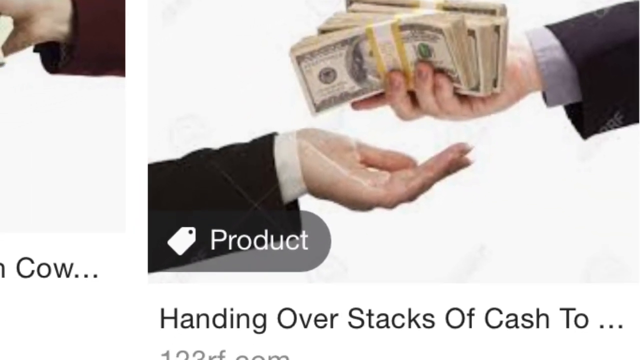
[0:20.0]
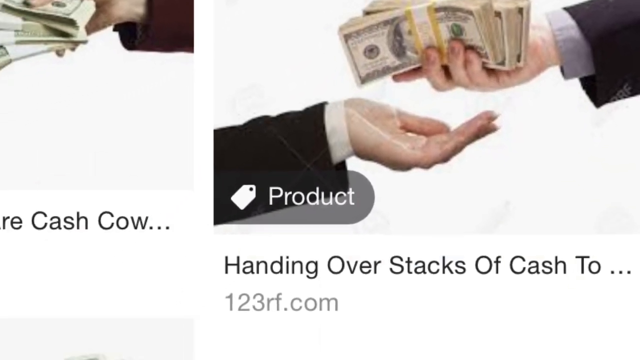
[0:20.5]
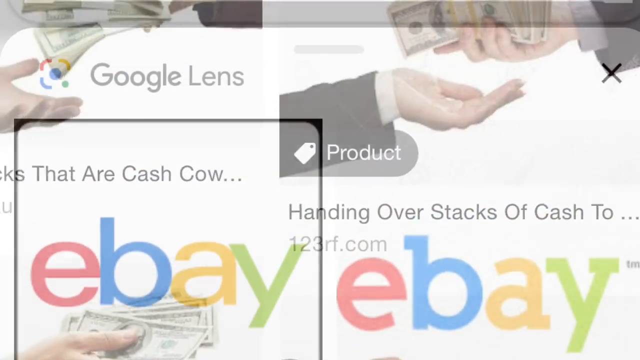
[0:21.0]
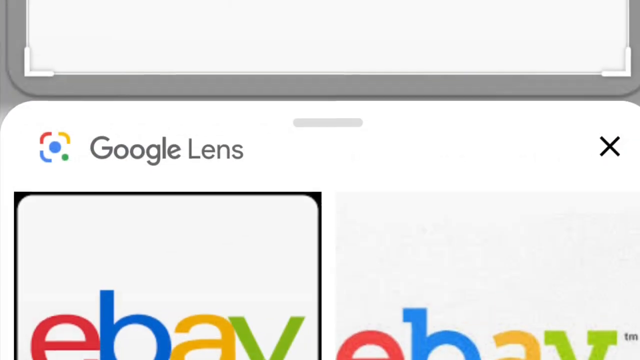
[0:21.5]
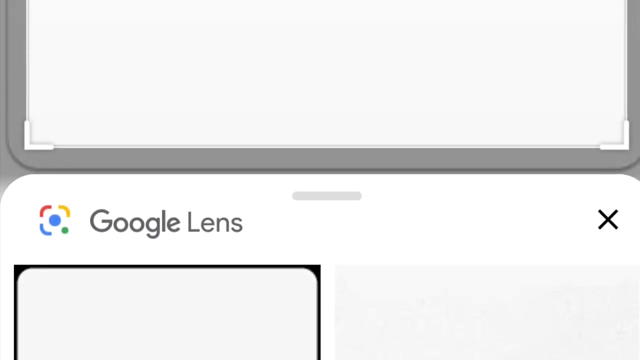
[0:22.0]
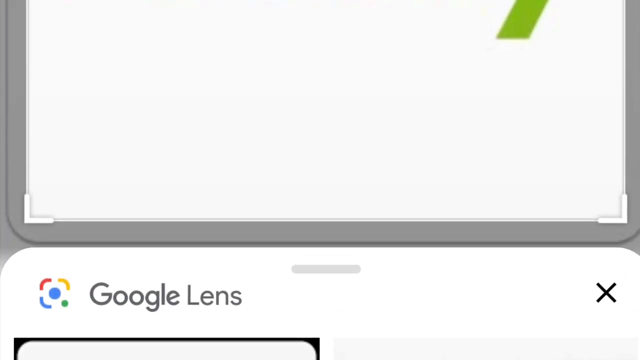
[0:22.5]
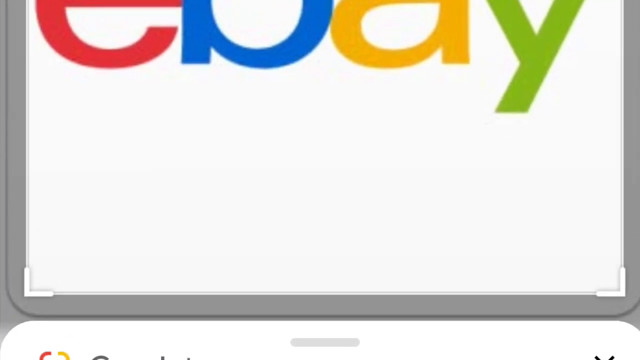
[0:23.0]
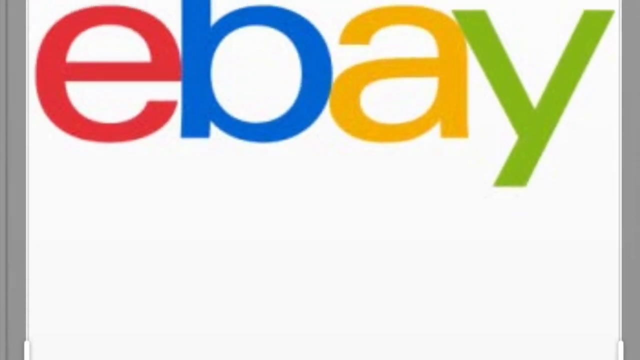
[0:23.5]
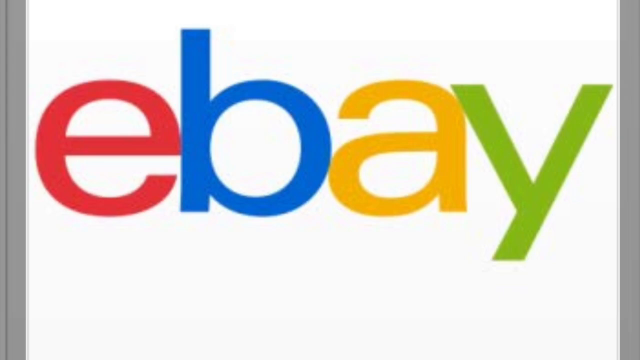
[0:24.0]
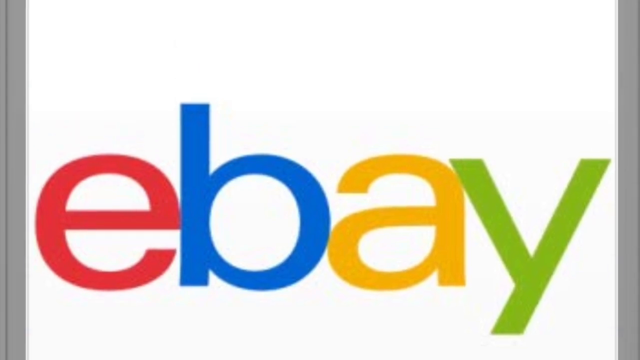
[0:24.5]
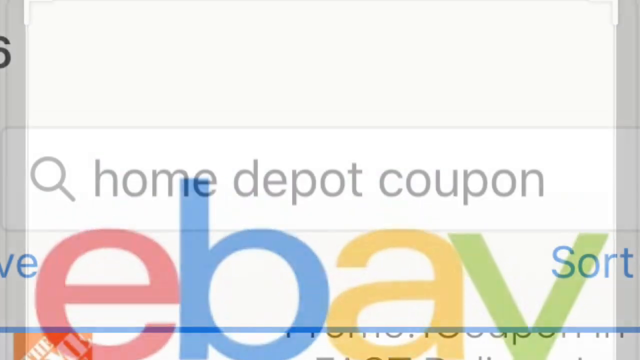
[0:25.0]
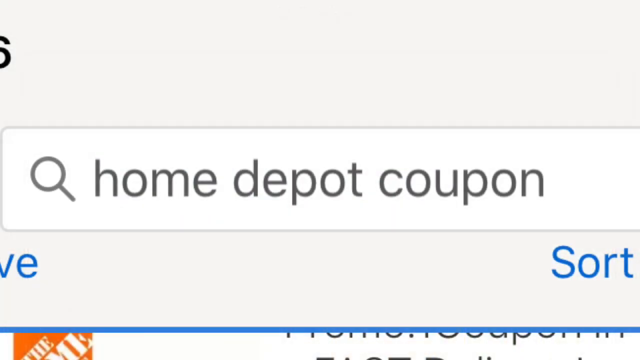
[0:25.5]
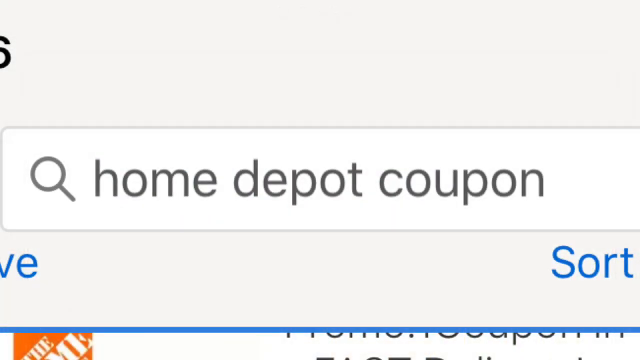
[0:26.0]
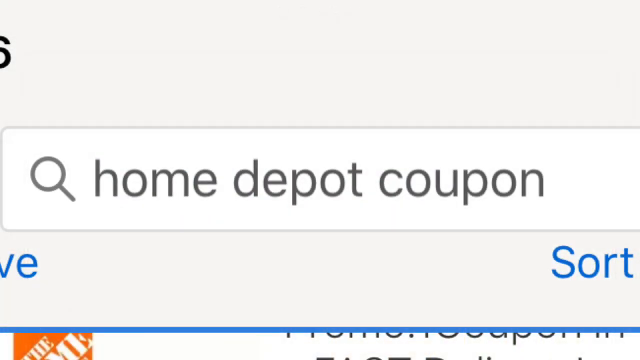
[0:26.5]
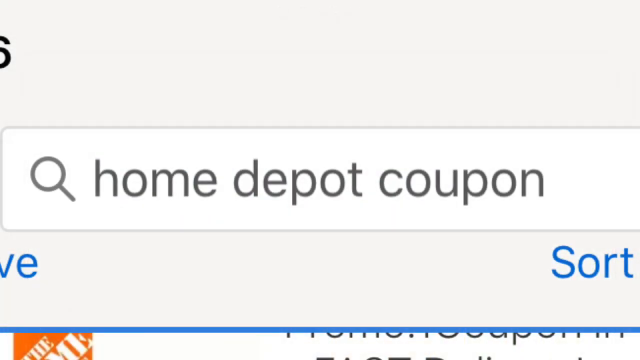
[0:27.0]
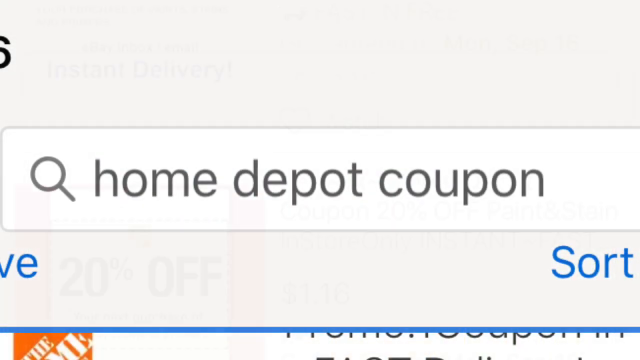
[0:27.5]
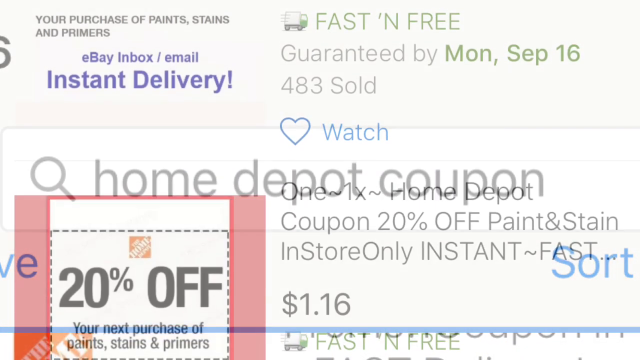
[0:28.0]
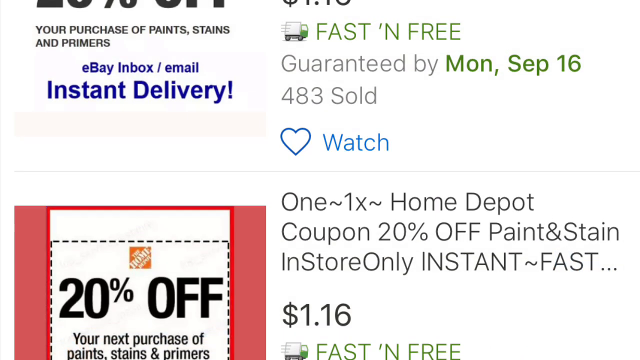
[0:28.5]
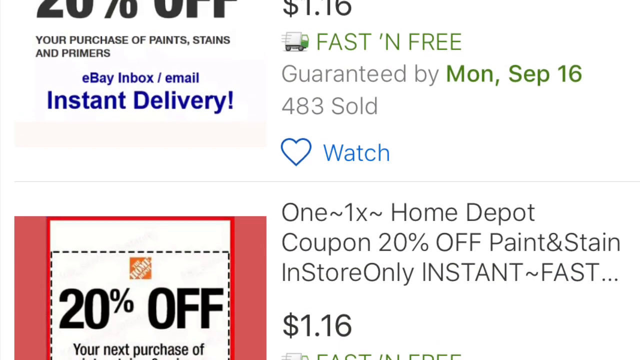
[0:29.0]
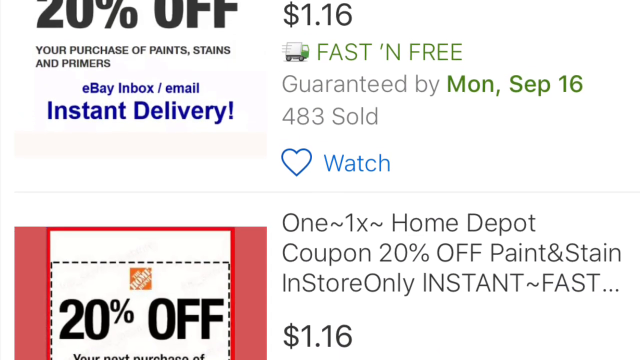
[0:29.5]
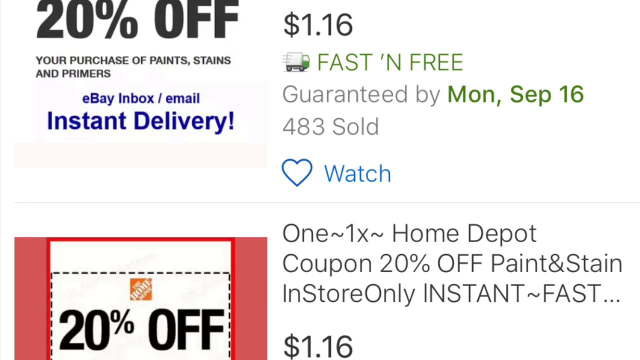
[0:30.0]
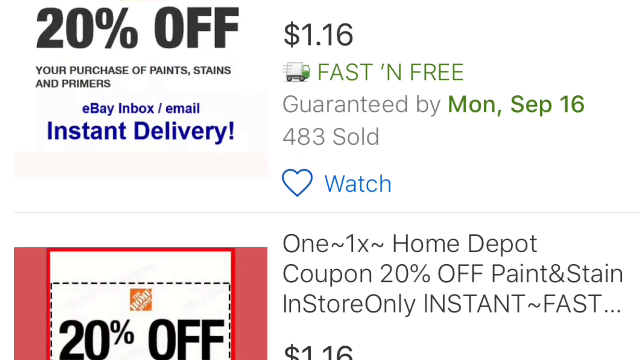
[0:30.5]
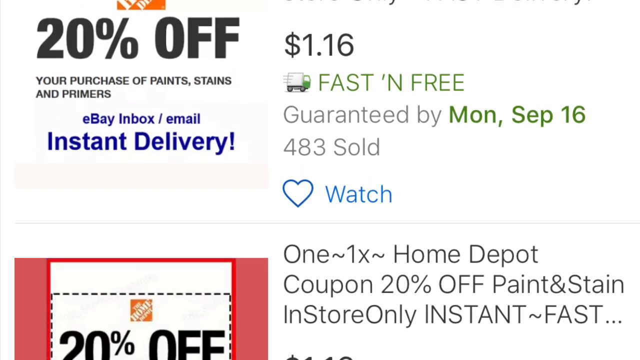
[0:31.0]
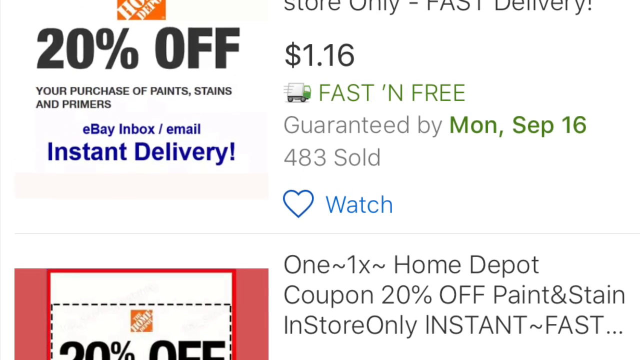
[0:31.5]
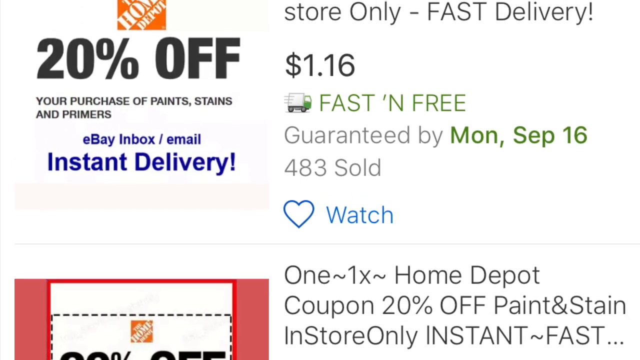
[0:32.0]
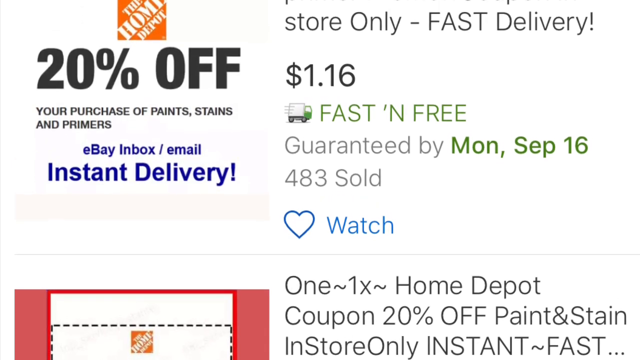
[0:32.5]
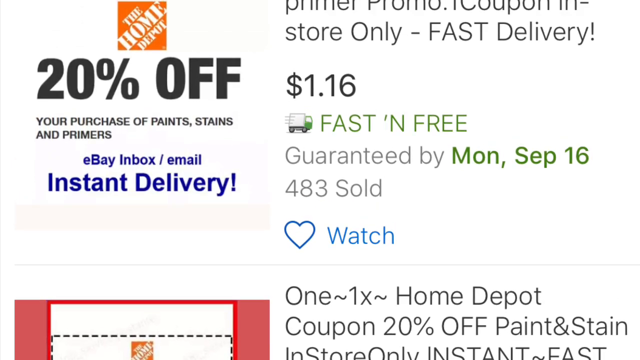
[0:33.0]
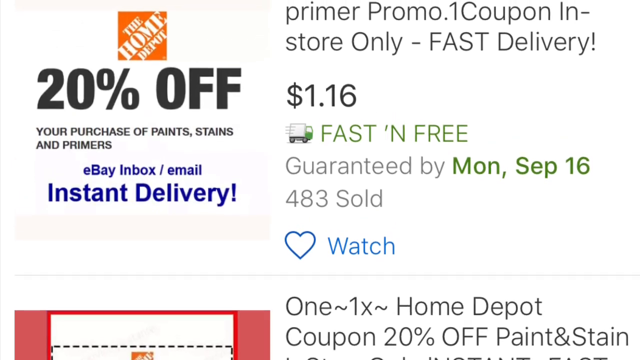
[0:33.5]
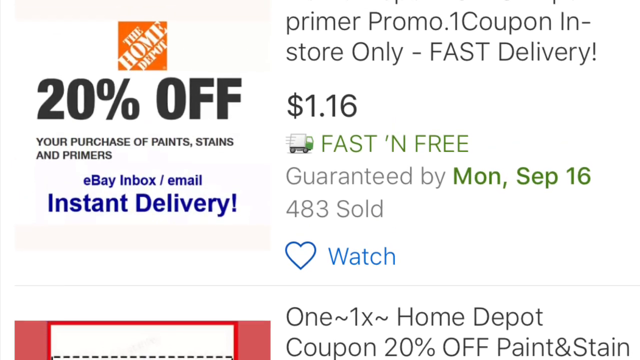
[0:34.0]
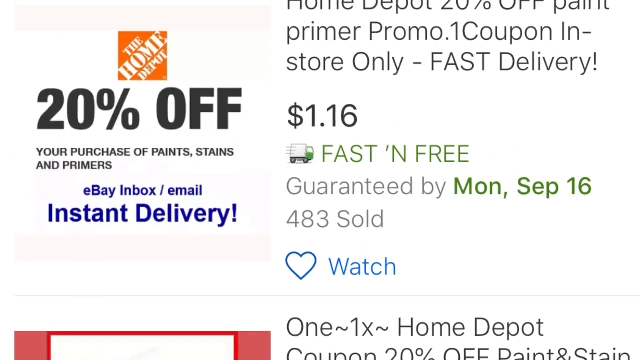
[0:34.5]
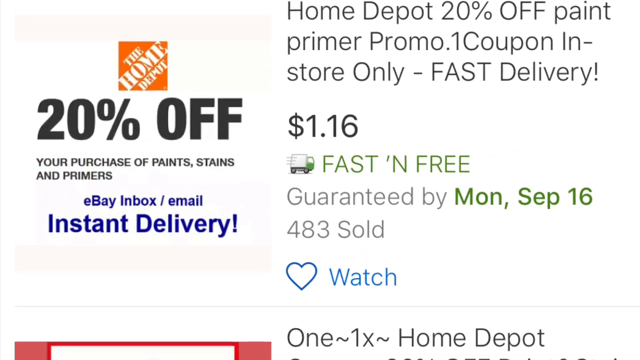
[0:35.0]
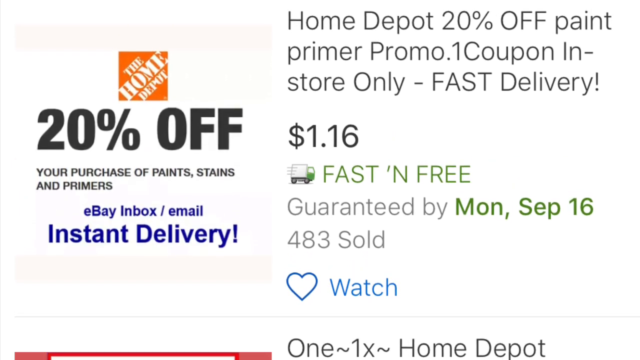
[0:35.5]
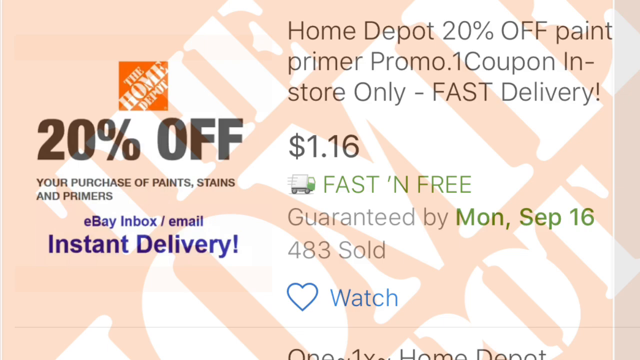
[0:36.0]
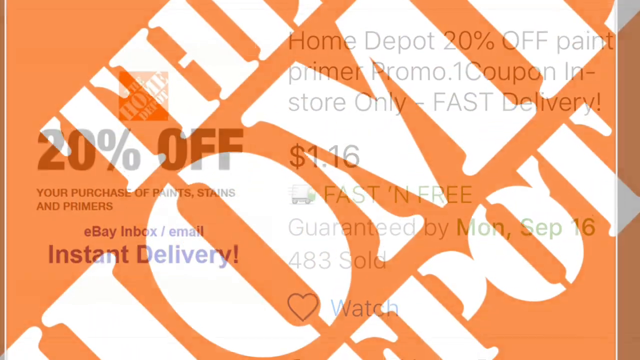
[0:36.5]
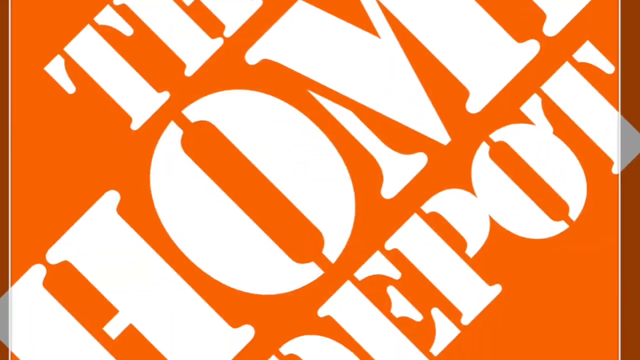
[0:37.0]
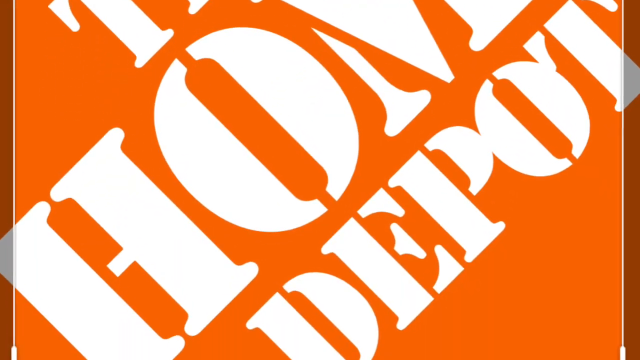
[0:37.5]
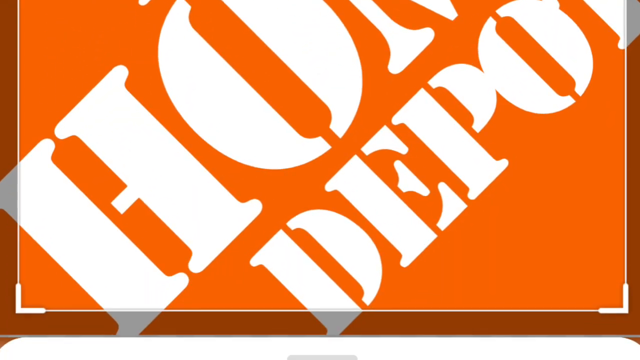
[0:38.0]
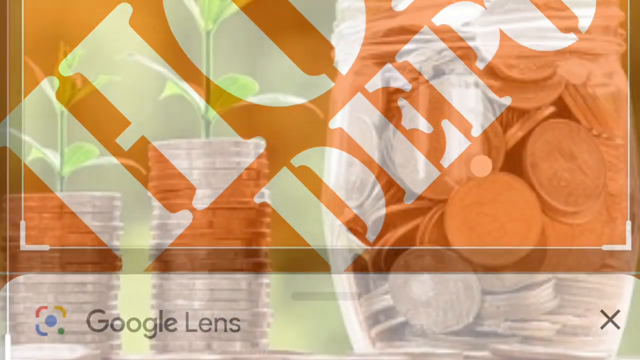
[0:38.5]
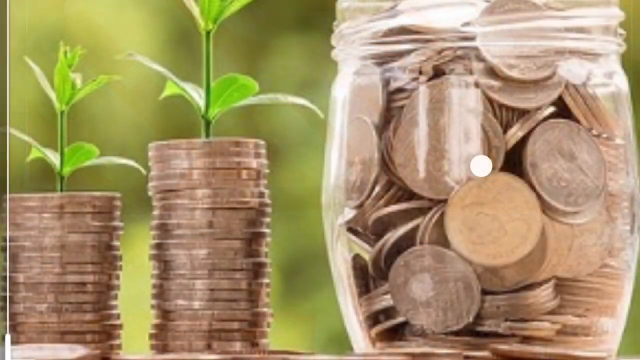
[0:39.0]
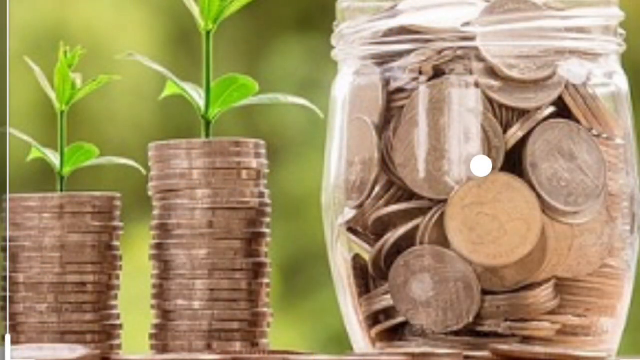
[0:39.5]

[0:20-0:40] Some of the same images appear: eBay, the Home Depot coupon, pictures of stacks of cash being handed over, and searches. Then a 20 percent off Home Depot coupon appears, shown as purchasable for a value of $1.16 with free shipping. Text reads "eBay inbox / email instant delivery," suggesting these are probably Home Depot coupons being sold on eBay.